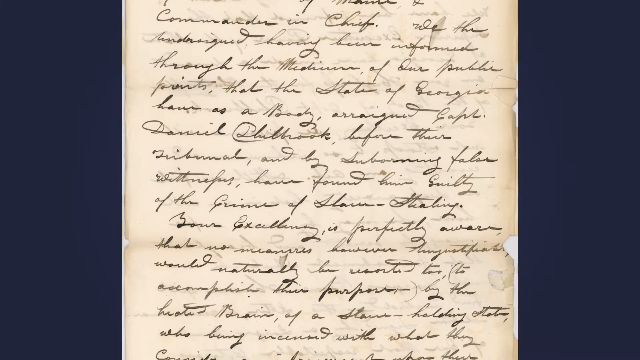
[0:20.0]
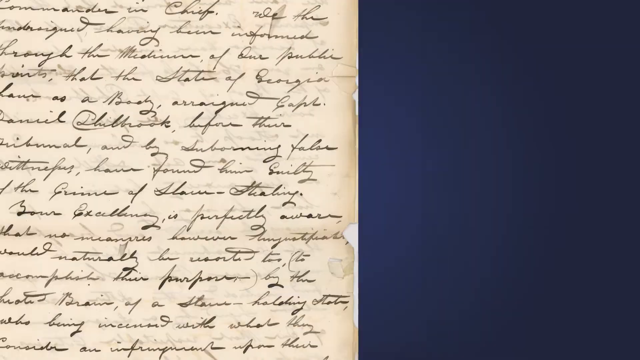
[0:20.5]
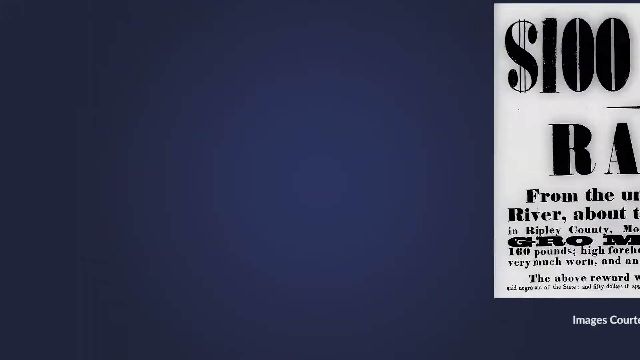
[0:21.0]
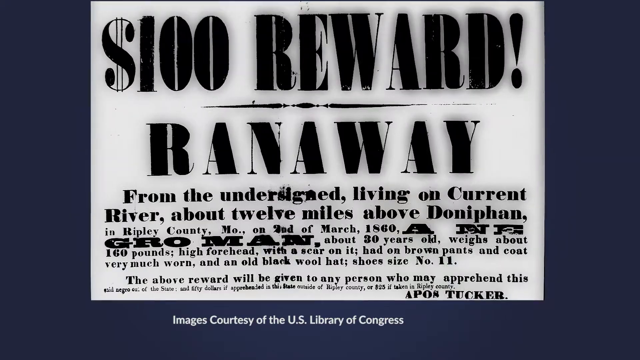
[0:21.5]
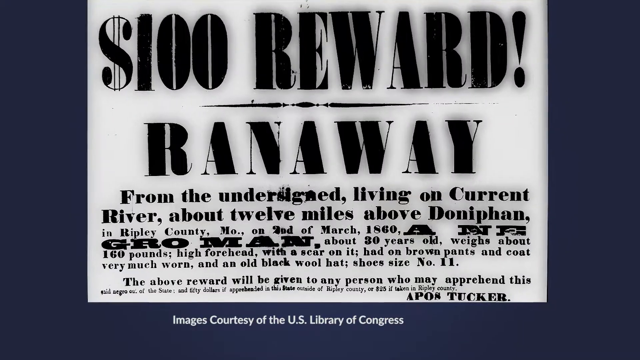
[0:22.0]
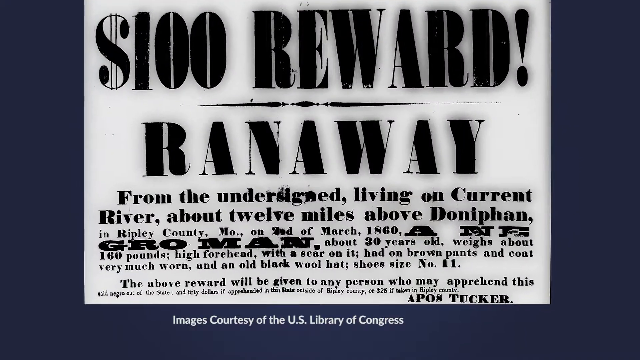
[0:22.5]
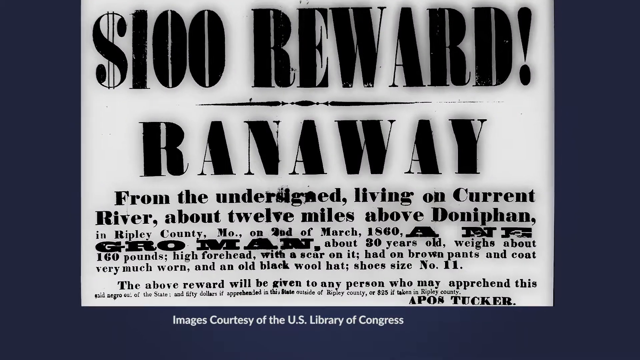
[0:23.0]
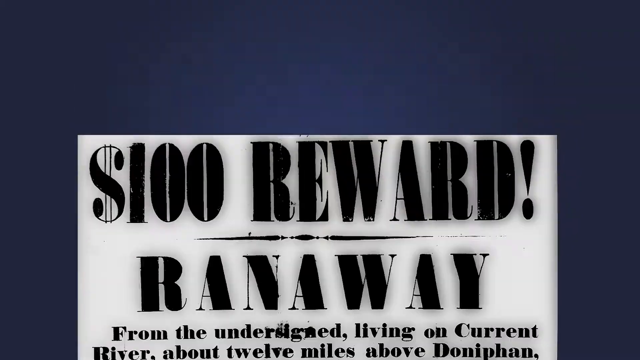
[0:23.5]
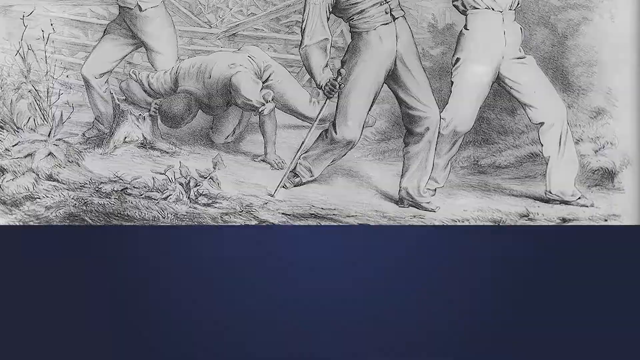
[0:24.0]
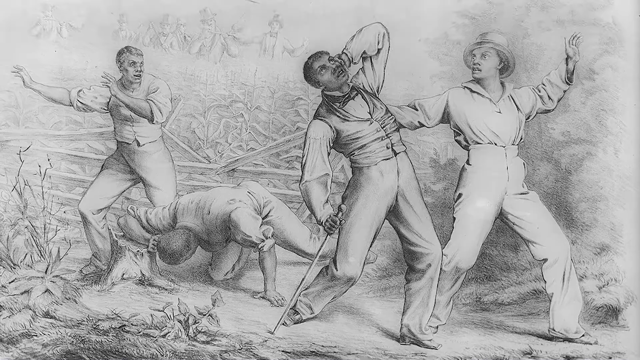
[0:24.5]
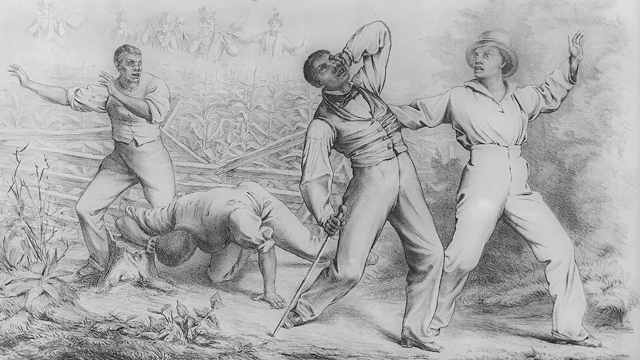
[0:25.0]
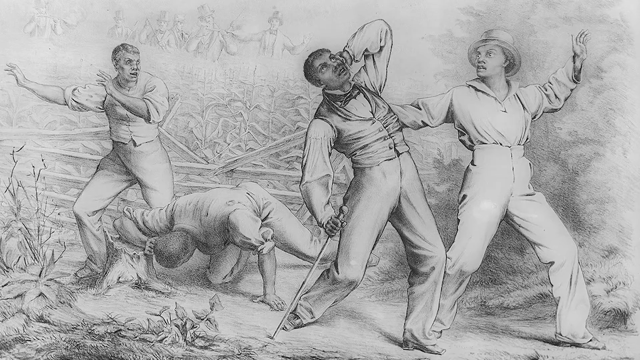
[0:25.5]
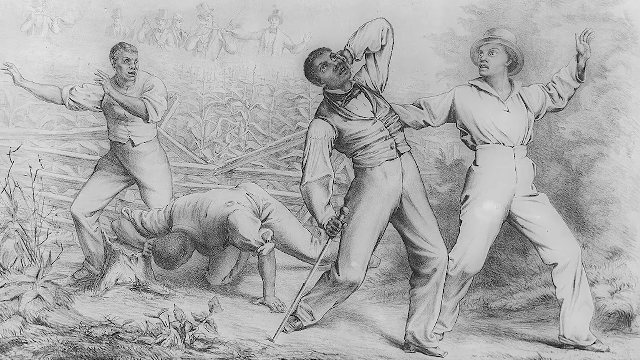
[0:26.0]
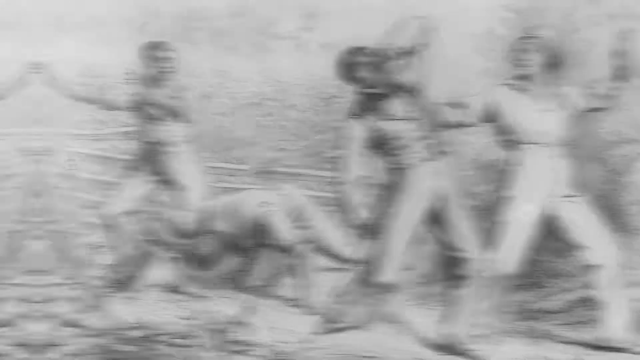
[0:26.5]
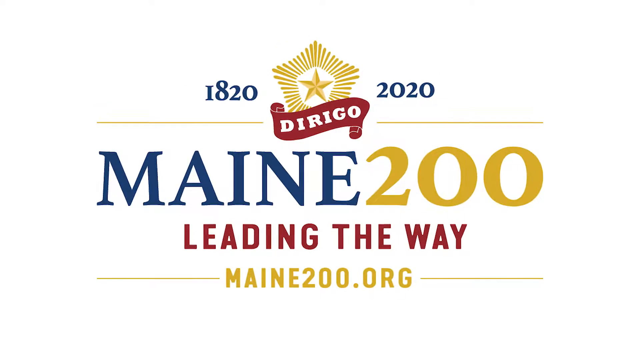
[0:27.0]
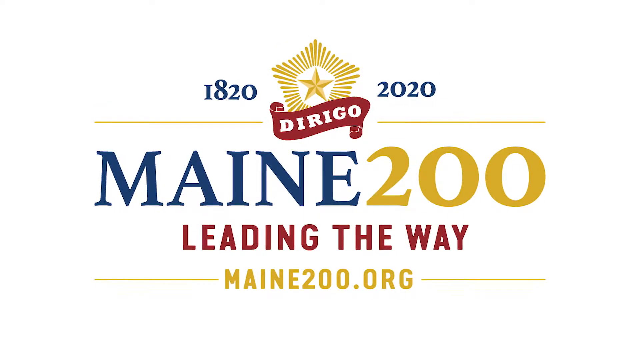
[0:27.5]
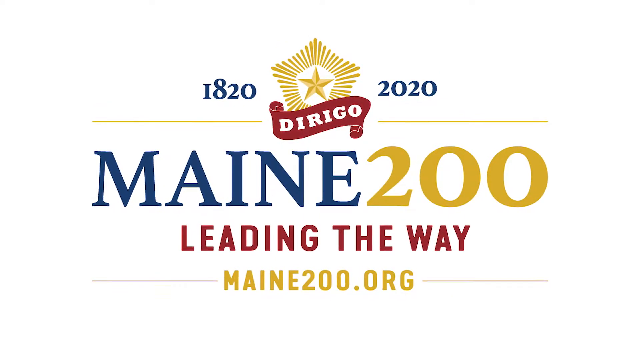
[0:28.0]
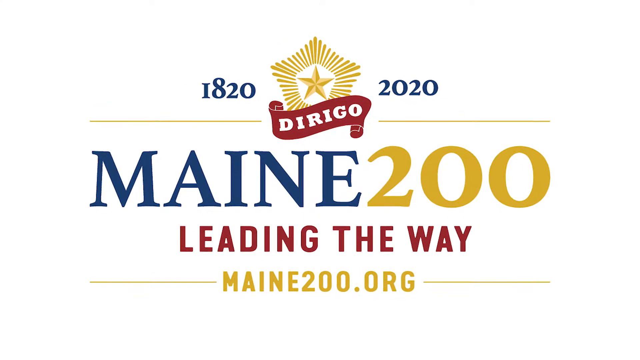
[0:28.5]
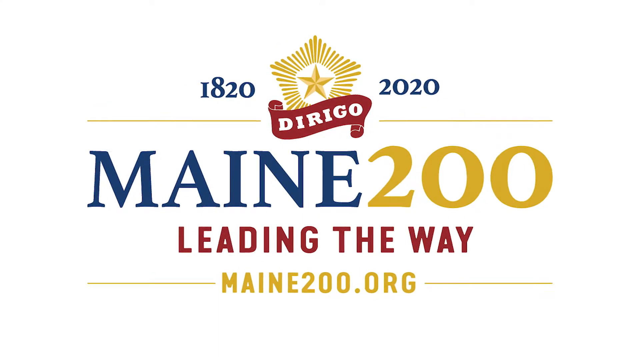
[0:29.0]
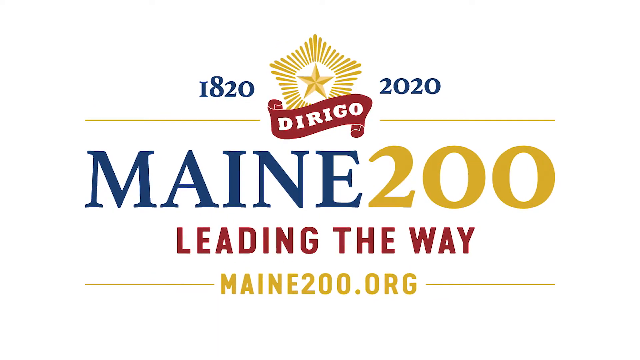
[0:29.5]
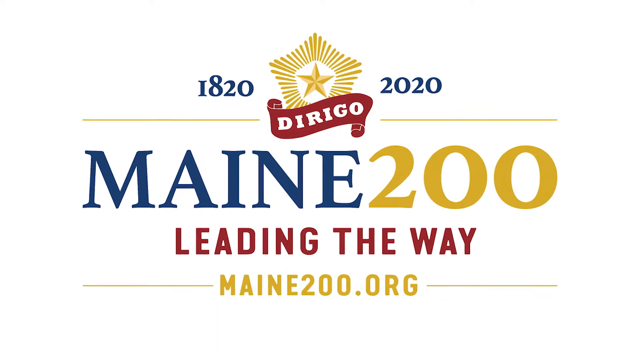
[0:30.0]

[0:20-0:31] An old parchment with cursive handwriting that appears to be quite old, also from the Library of Congress, is shown. It transitions to what appears to be a print-press-style newspaper article or wanted poster for a man who had been lost on the river at the time of printing. Next is a black and white drawing of a series of men who seem to be farming and scared of some sort of entity to the right side of them. The video then transitions to a logo similar to the one at the beginning, showing the dates 1820 and 2020 and the text "Maine200" and "leading the way", before displaying the website.